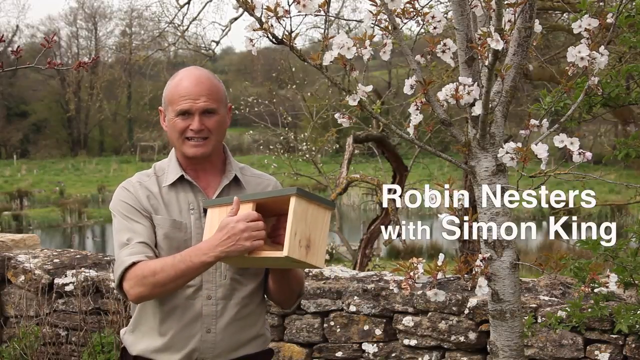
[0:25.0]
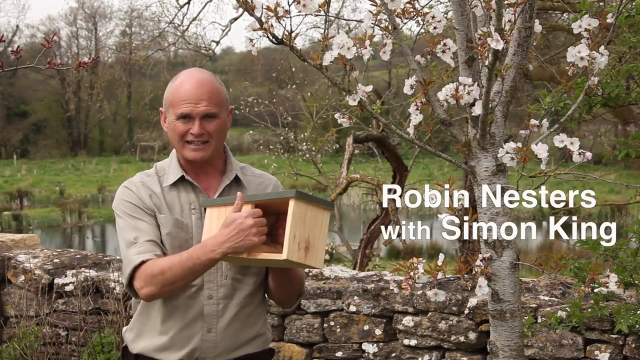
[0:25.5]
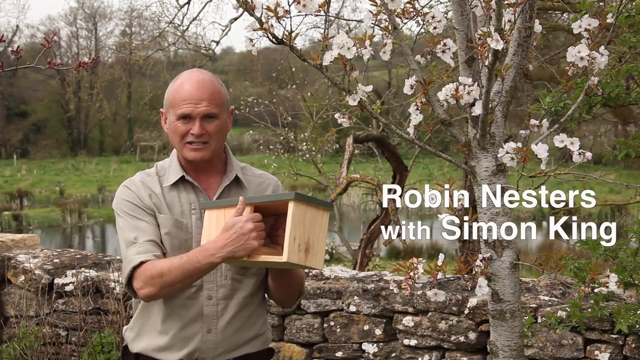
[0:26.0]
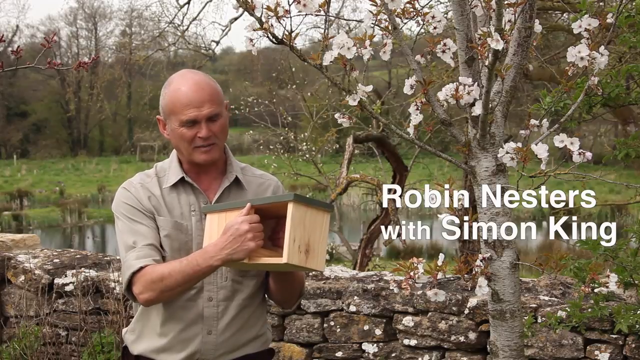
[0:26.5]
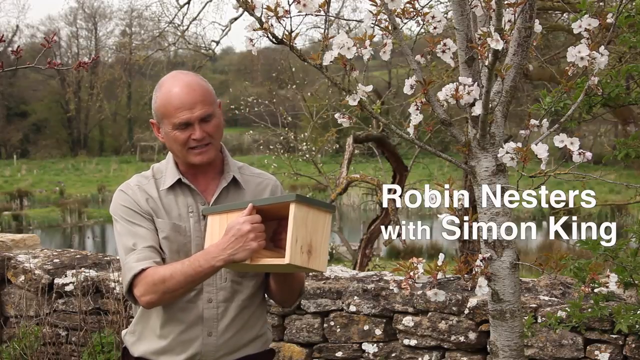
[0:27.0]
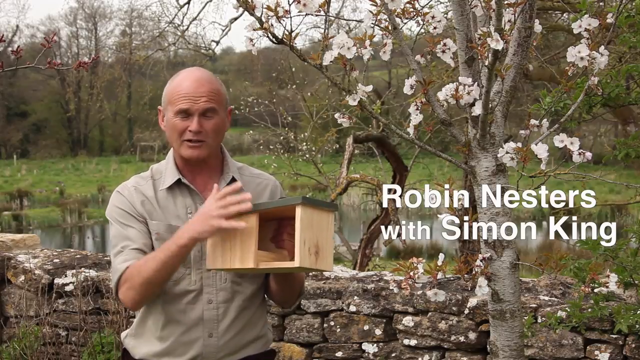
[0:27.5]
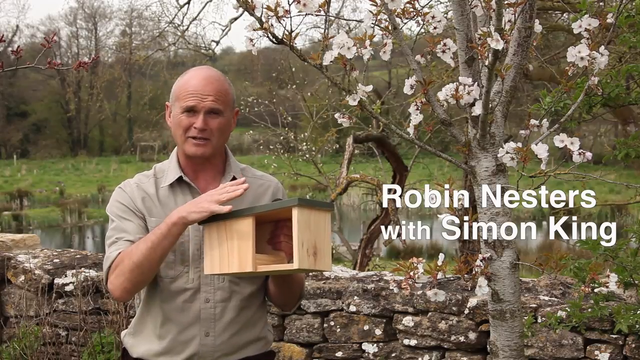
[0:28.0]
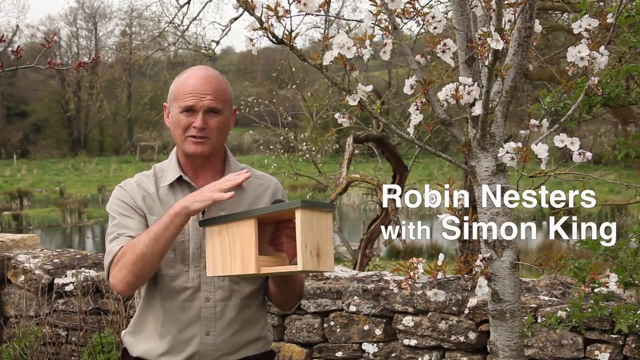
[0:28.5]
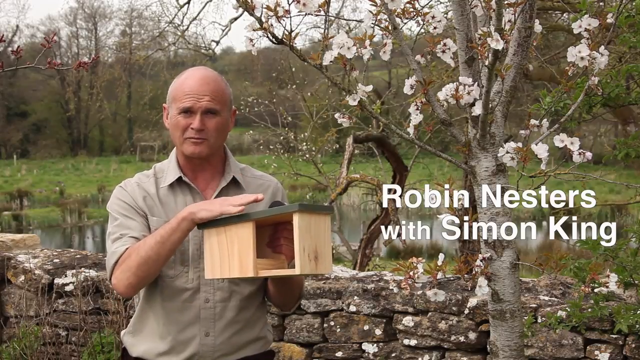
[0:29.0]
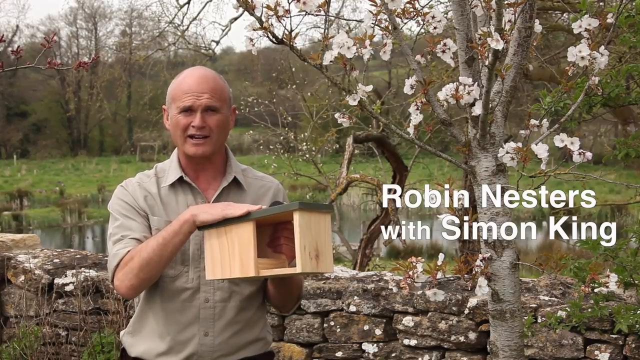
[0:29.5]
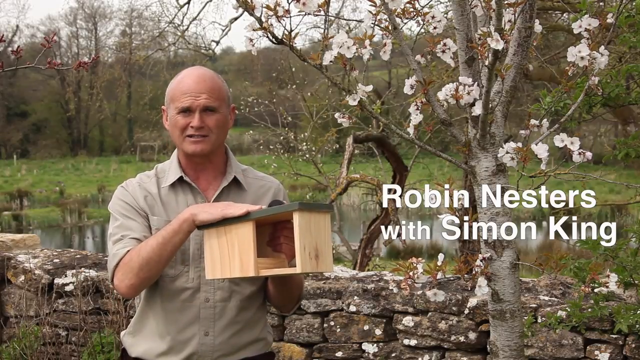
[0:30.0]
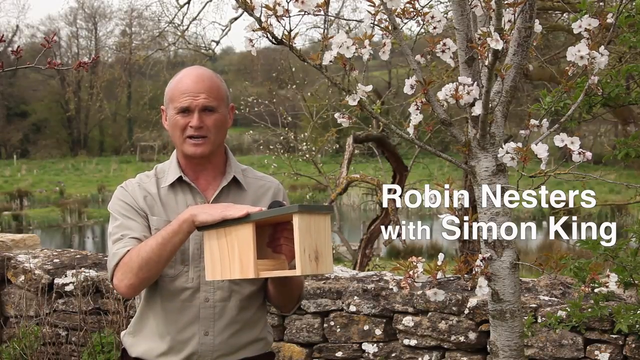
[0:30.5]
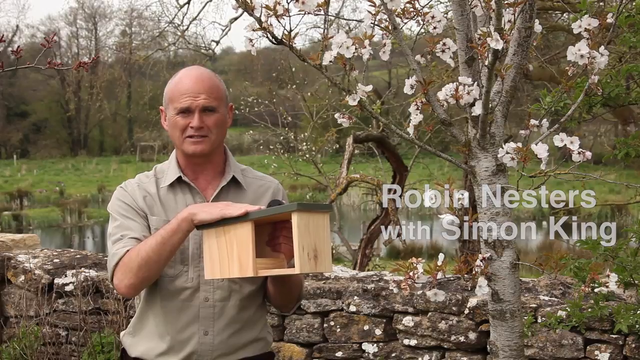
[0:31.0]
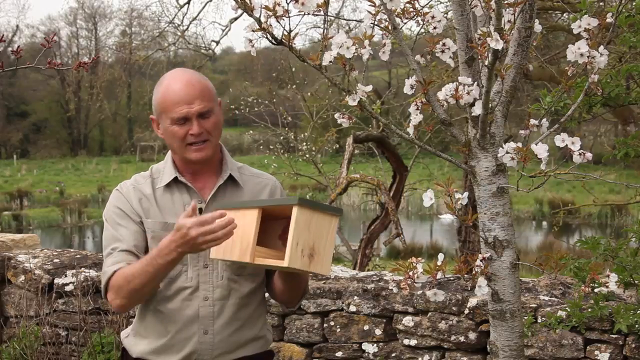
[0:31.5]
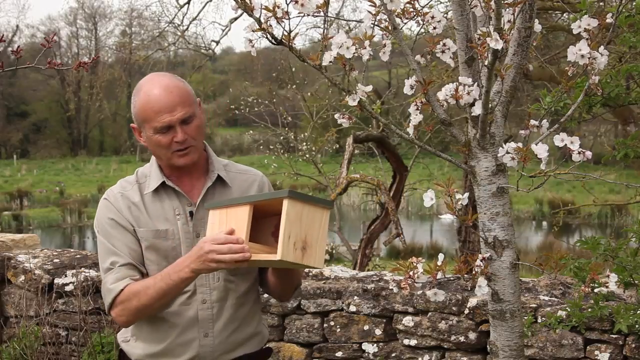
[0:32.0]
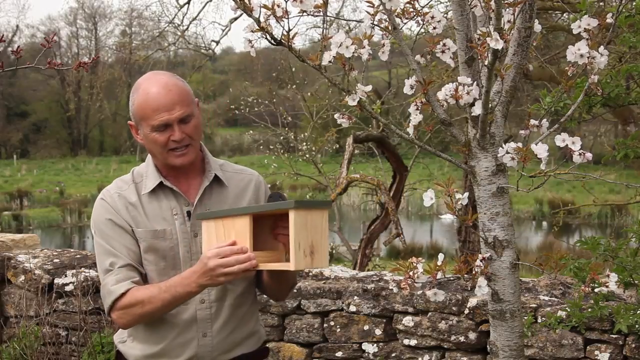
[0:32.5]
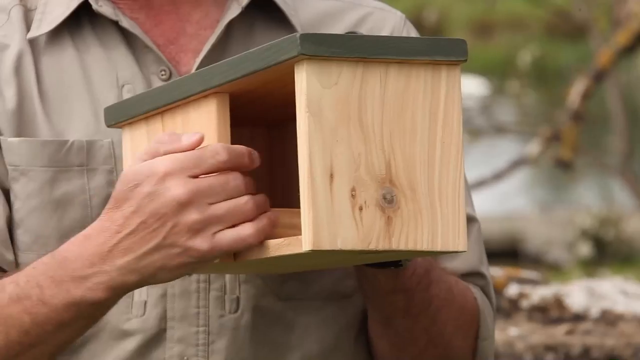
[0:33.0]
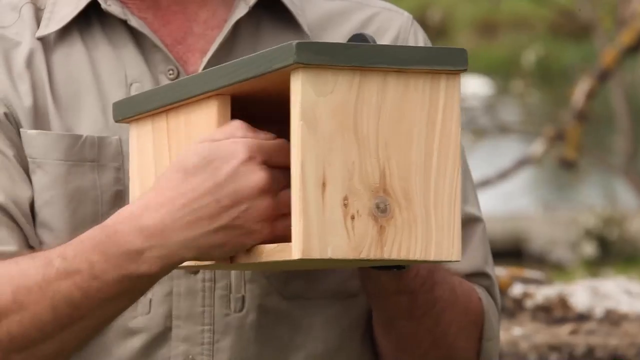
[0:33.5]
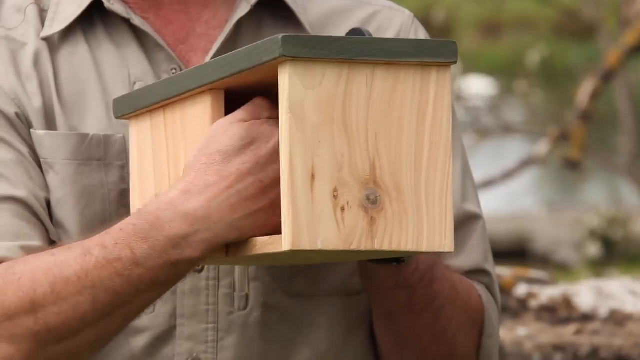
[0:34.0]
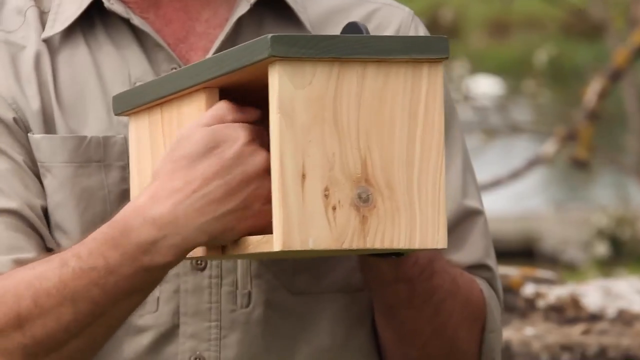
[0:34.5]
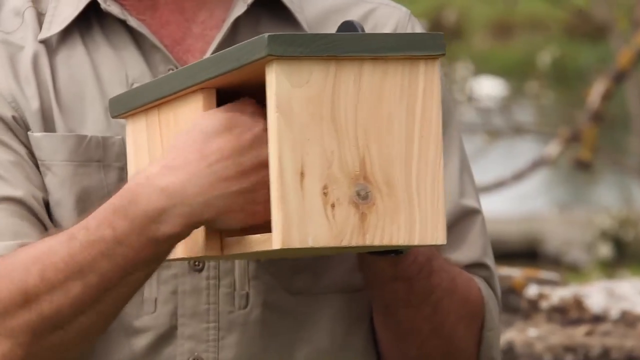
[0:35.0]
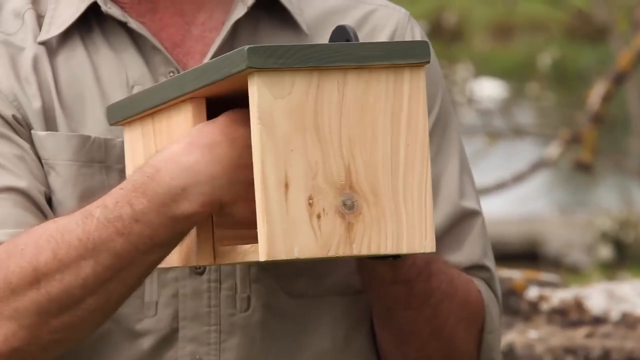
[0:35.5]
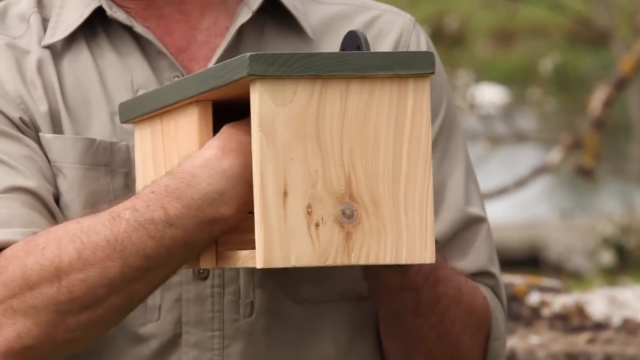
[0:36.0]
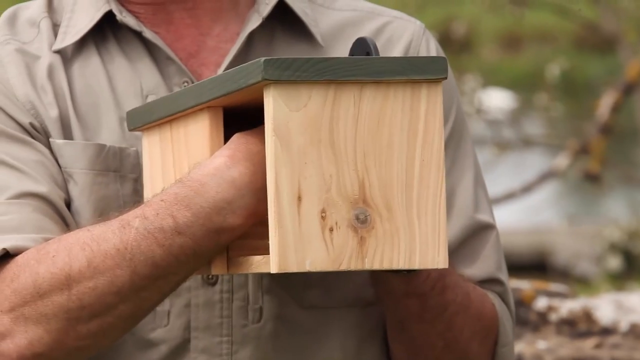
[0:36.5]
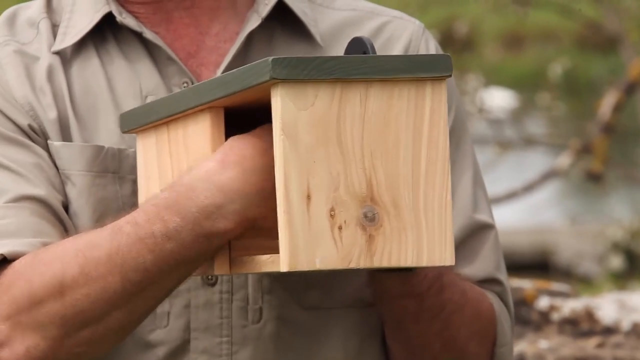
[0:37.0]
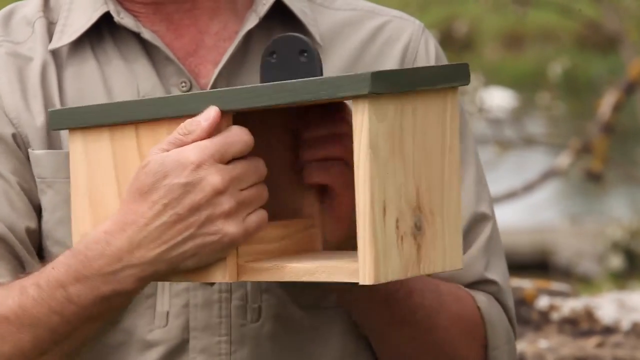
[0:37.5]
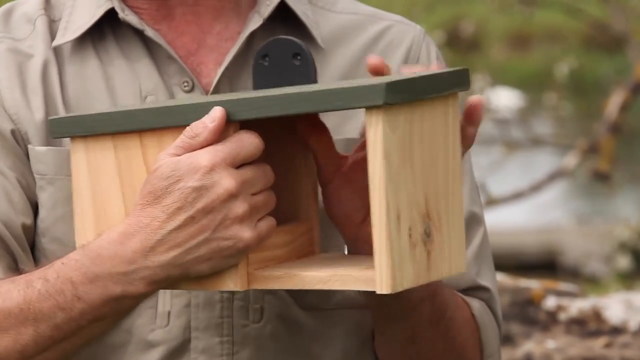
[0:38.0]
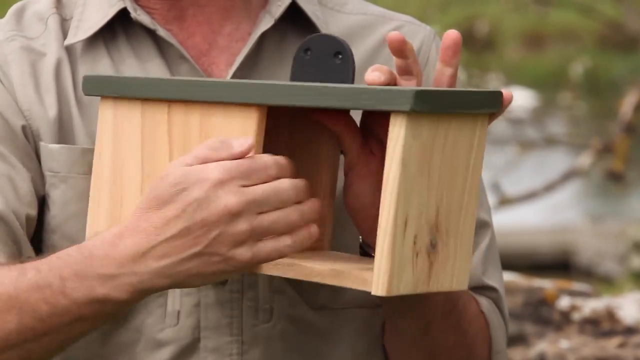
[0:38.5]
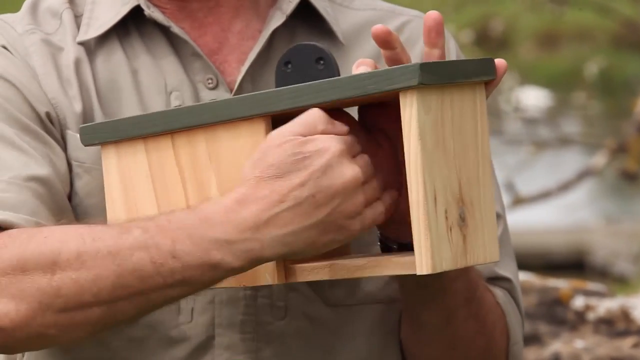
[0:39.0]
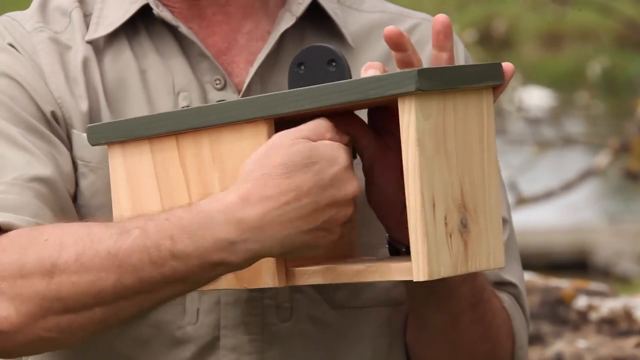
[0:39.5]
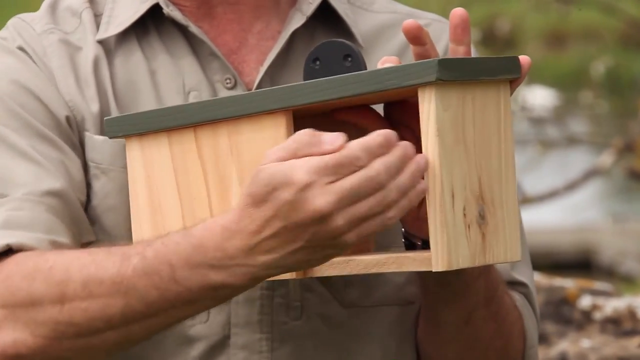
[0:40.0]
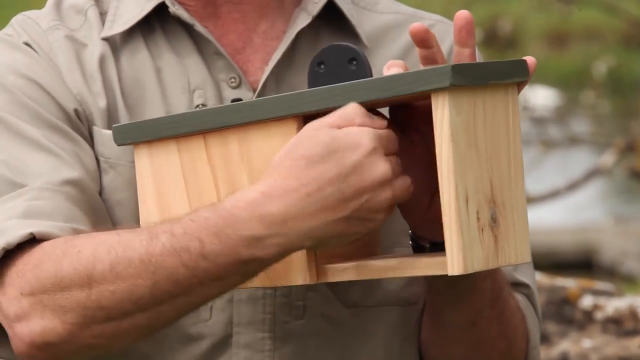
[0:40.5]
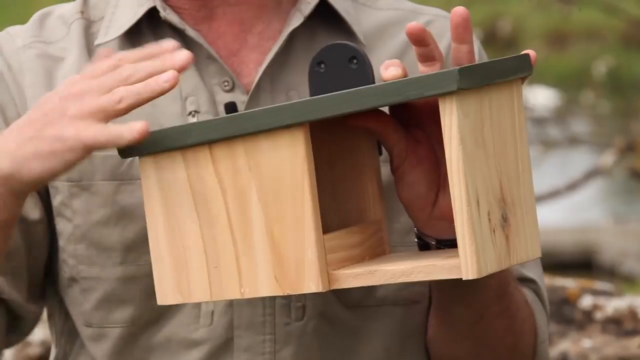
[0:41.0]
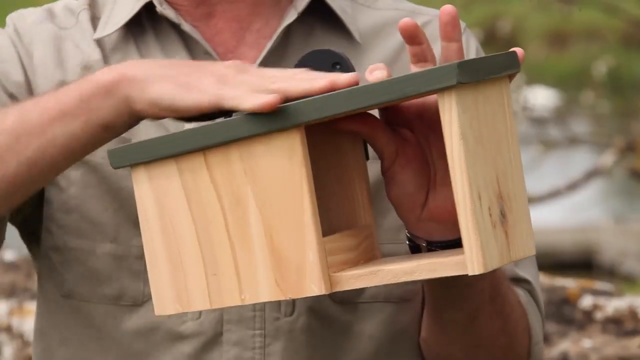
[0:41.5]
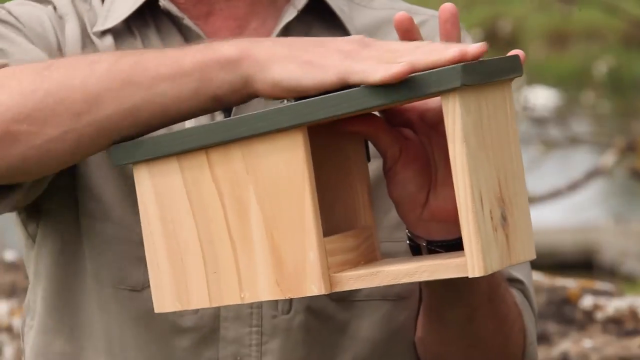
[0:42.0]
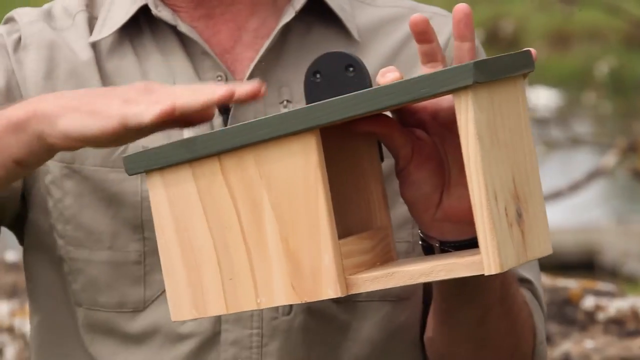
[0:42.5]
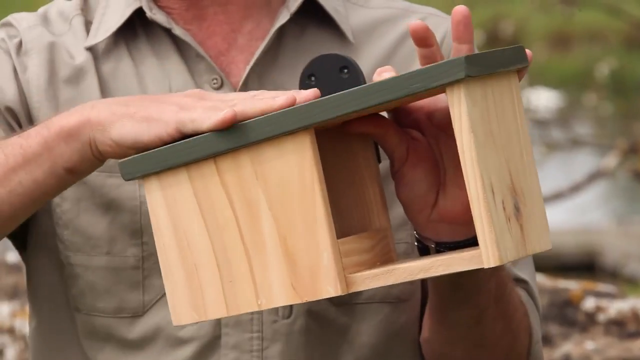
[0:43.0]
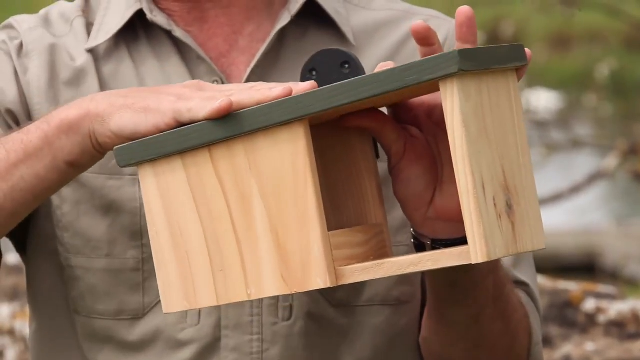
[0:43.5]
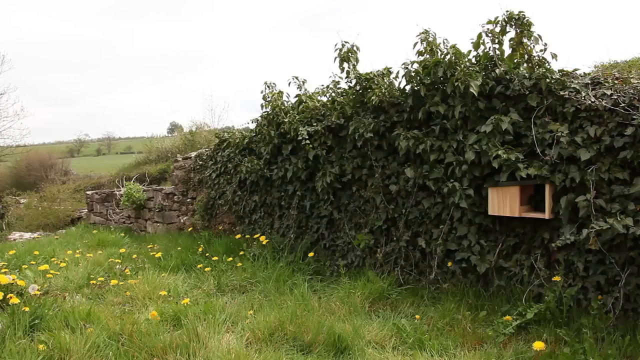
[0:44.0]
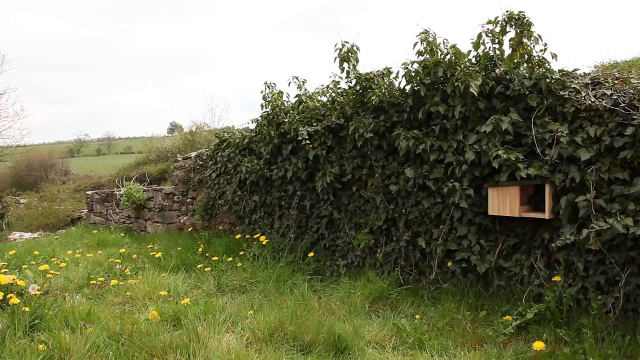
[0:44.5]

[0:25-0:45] The man is still talking. In the background there is a lake and a tree covered in many white flowers of an unidentified kind. The camera zooms in on the man's hand and the wooden box he is holding as he demonstrates what it does, putting his hands into the box, apparently to show how it works and what it is useful for. He is a bald white man. There is a lot of green grass around, and many tall trees are in the background.